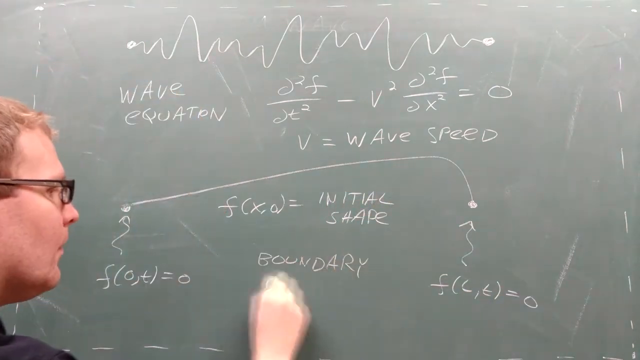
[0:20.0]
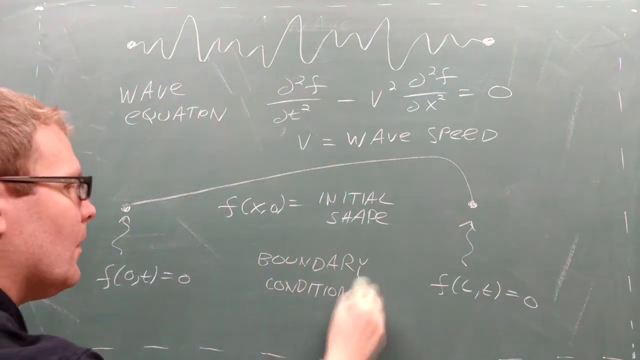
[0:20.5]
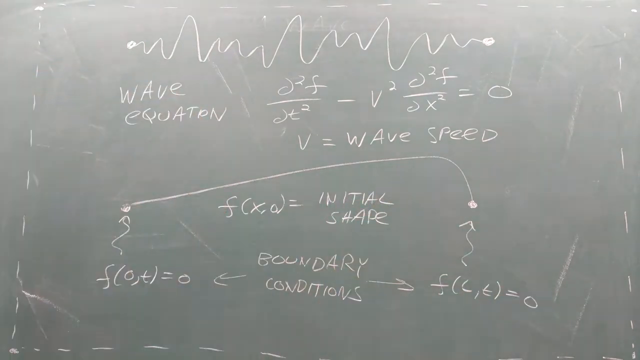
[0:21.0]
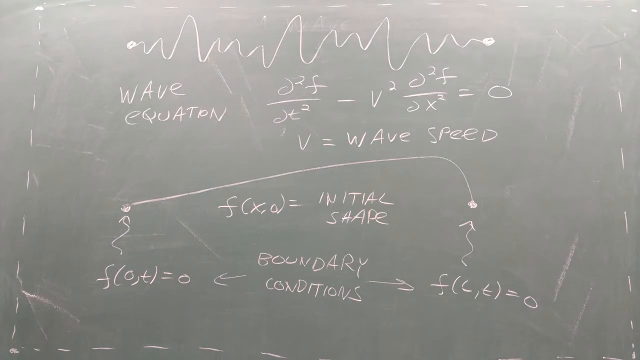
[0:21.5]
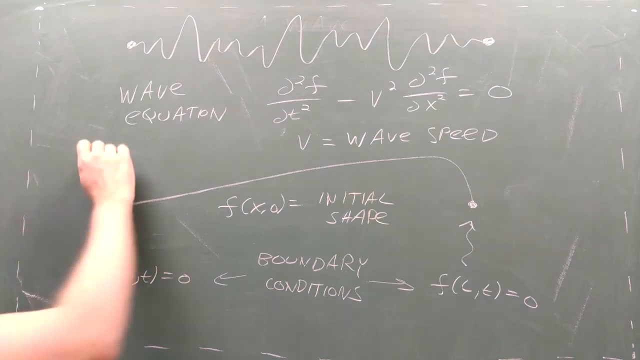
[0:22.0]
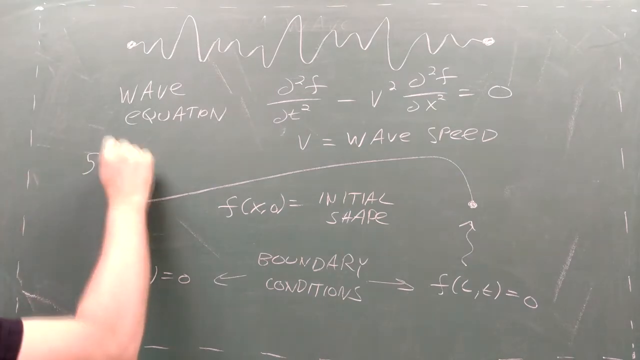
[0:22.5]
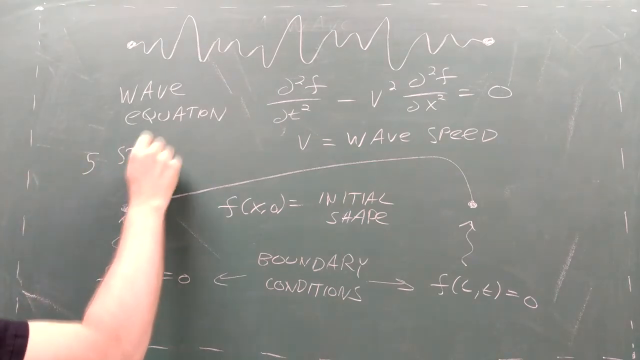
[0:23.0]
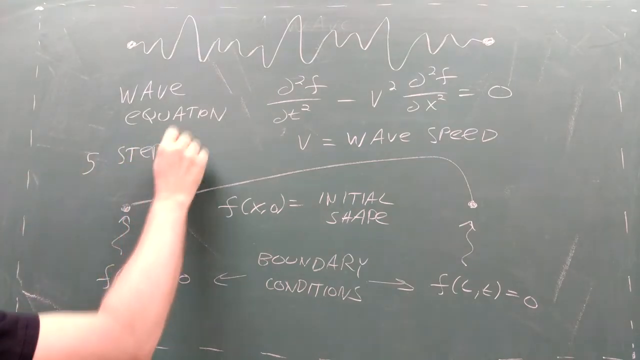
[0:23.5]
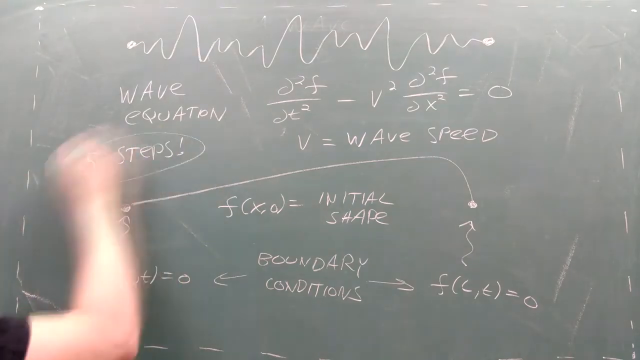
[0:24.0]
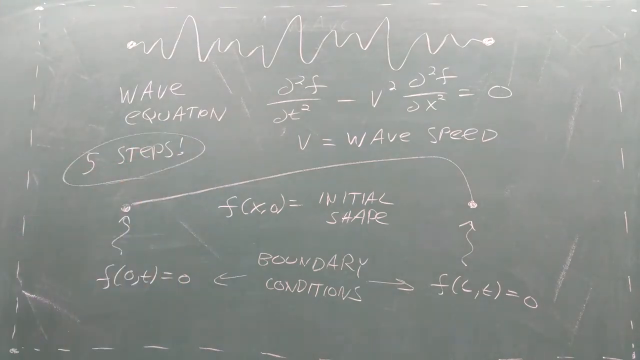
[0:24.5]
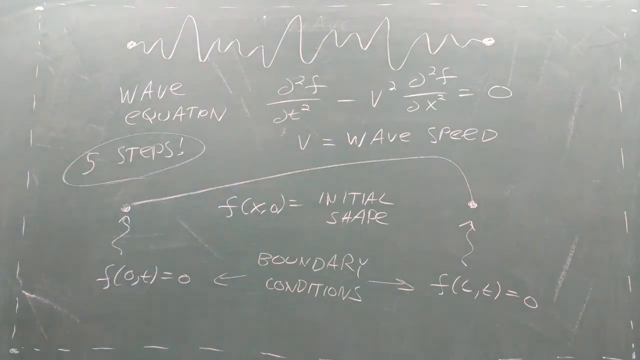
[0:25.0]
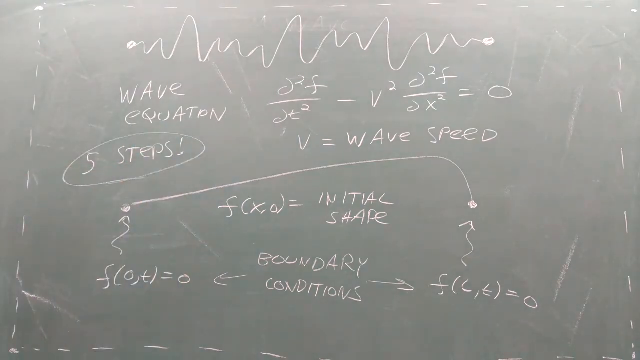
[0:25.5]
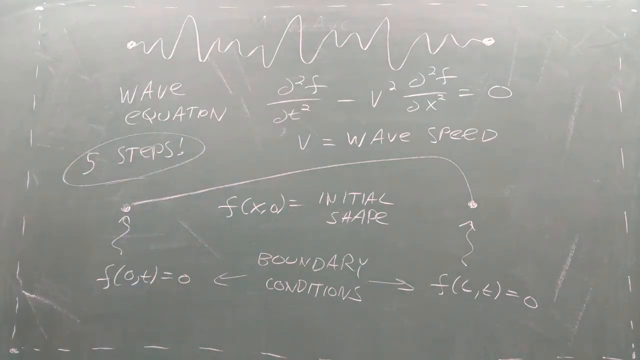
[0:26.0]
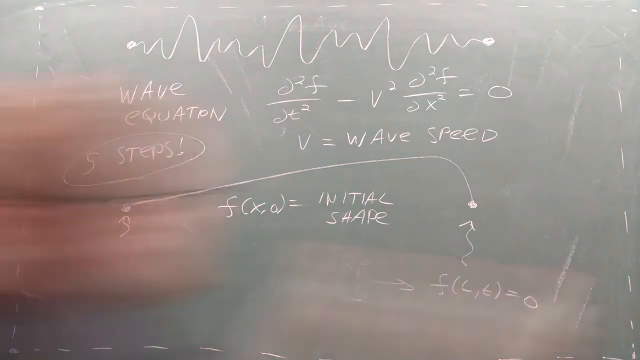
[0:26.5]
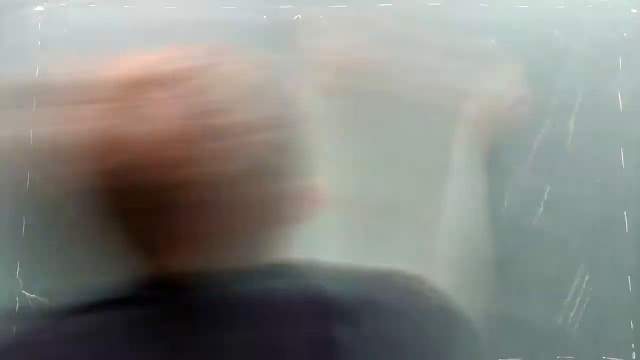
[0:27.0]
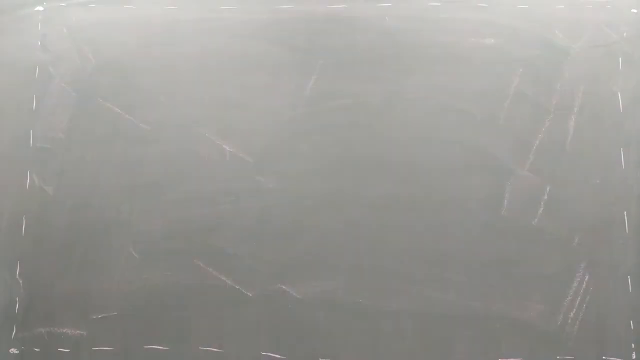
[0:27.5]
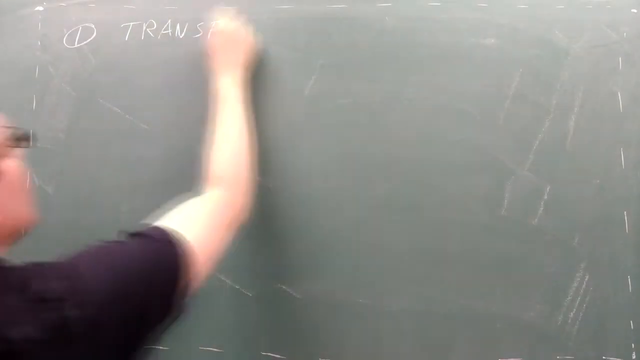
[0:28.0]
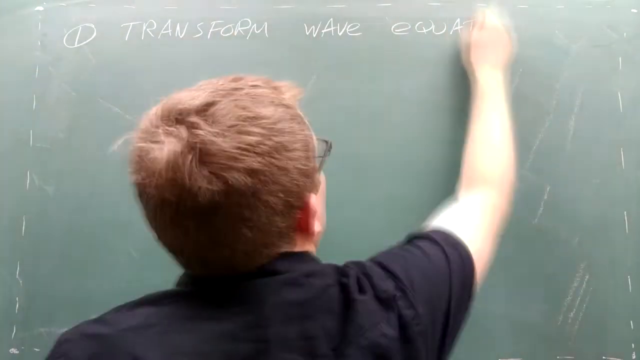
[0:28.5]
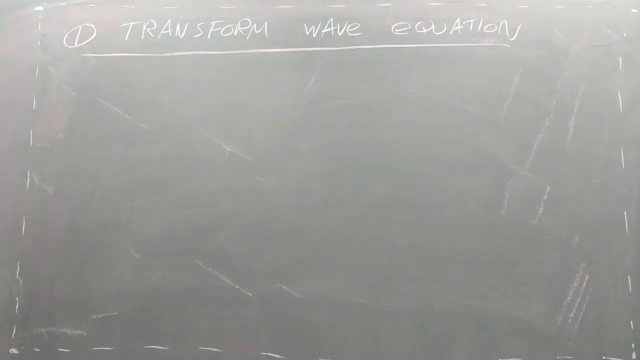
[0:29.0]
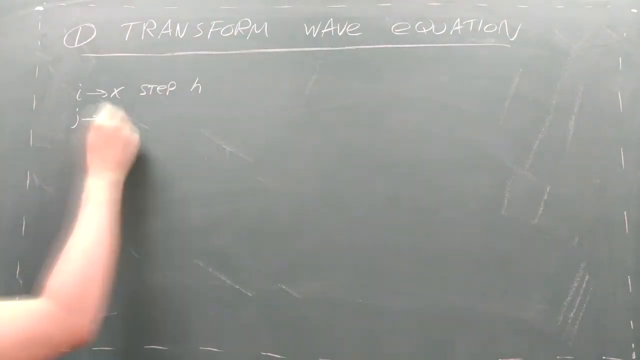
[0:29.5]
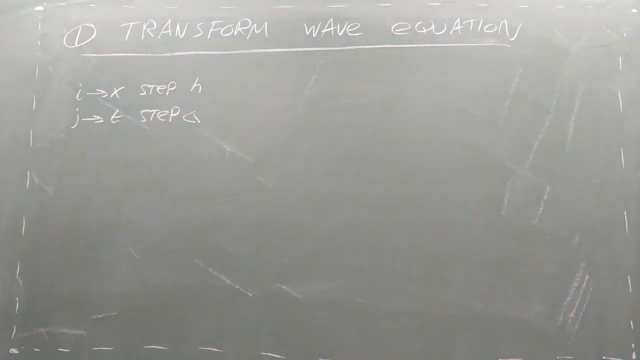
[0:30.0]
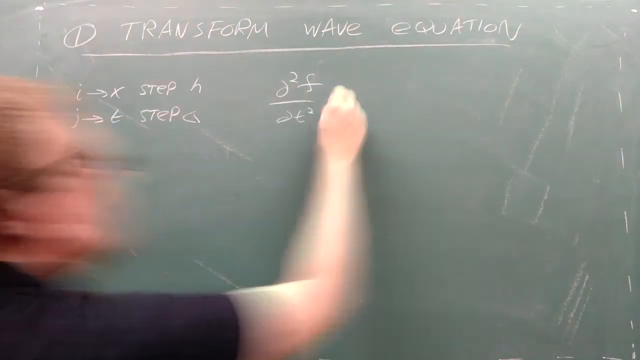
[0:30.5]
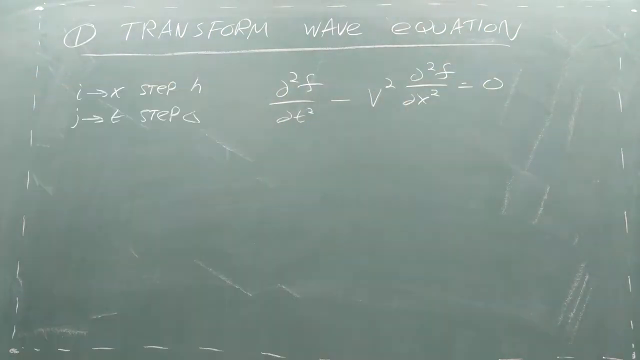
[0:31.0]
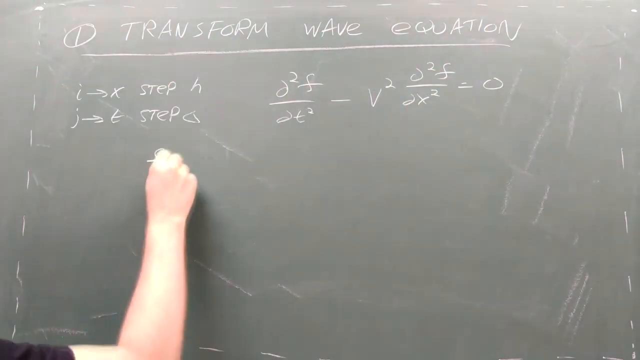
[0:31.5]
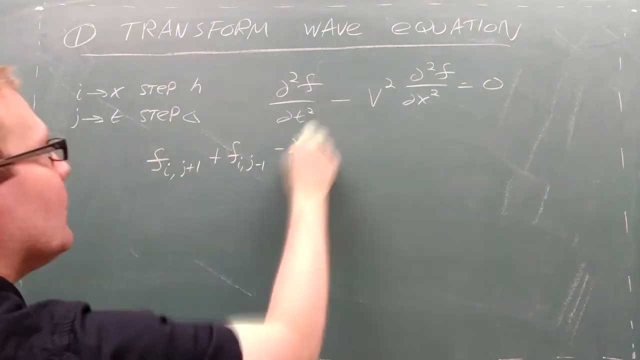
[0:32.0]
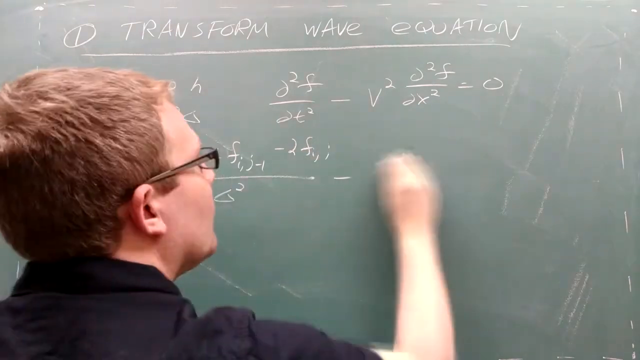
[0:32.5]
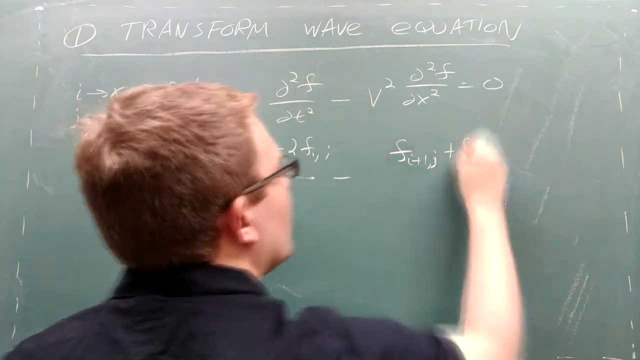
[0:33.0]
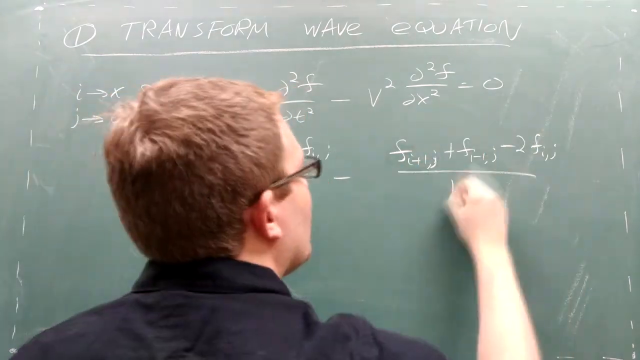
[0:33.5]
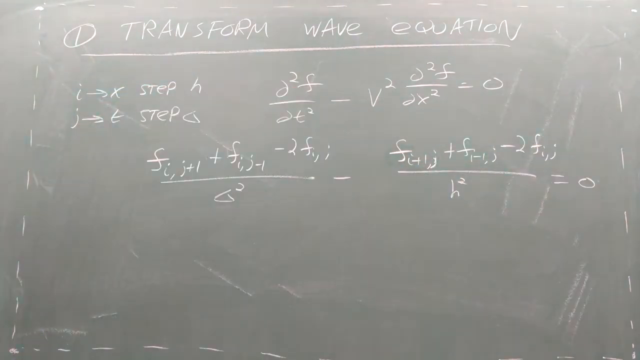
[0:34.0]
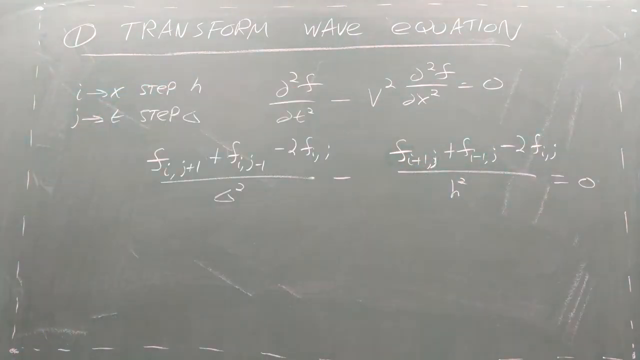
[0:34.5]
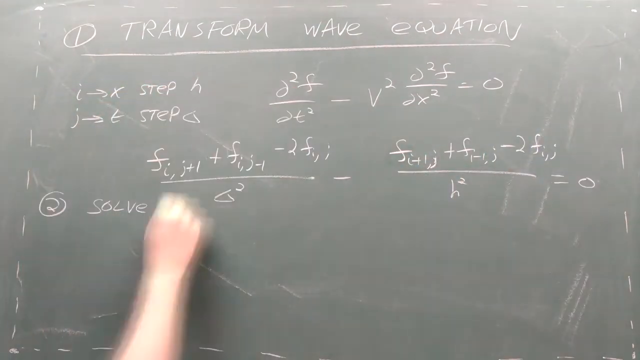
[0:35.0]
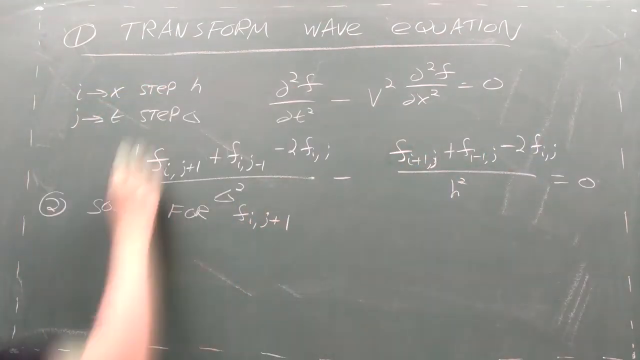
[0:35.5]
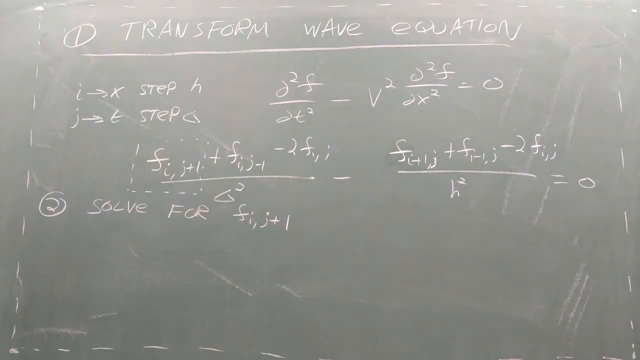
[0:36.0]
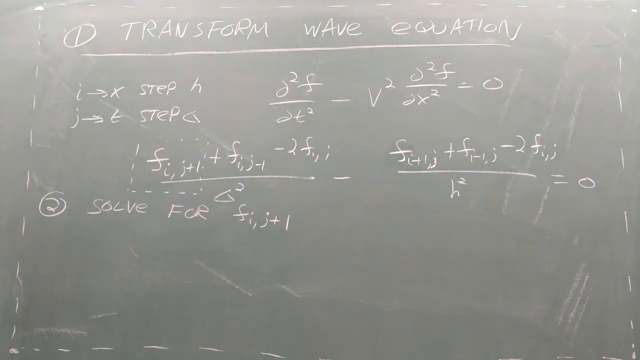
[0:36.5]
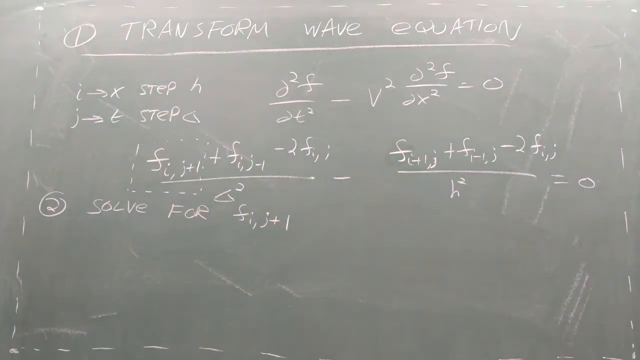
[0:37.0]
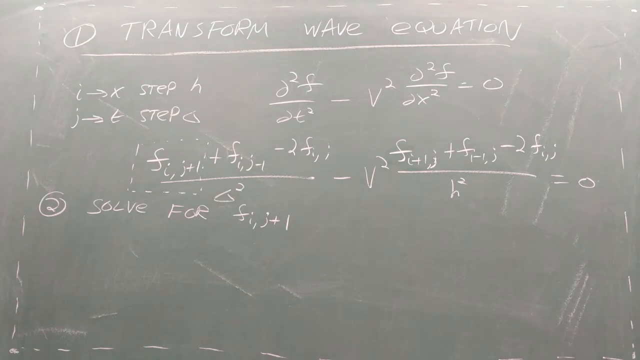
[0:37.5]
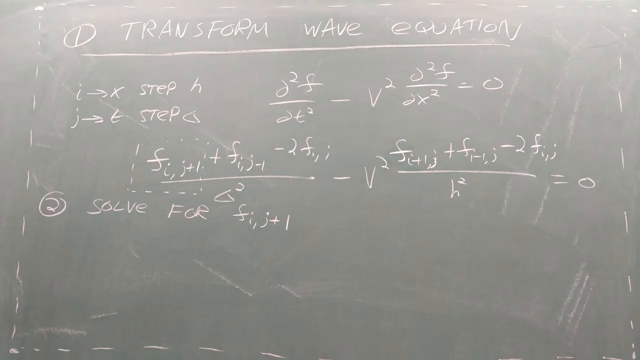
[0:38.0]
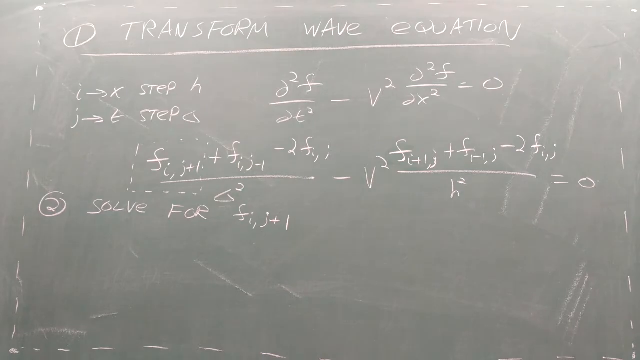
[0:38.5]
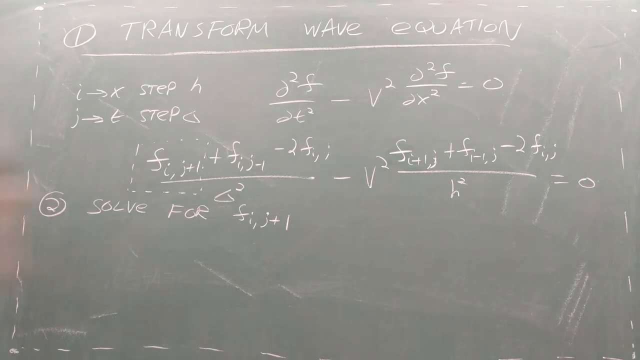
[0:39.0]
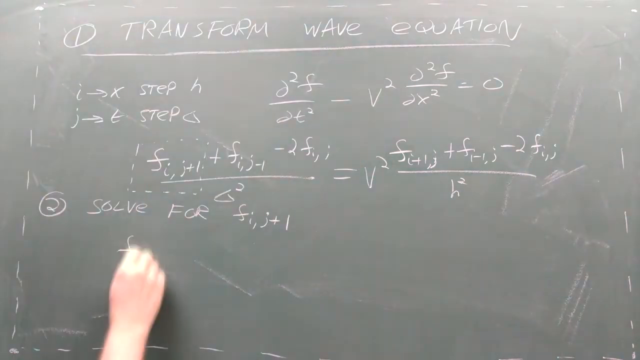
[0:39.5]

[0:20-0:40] The man shows a transform wave equation, with different slopes, patterns and equations, and several different ways to solve that one equation using both numbers and letters. He writes down five steps, the first of which is "transform wave equation."